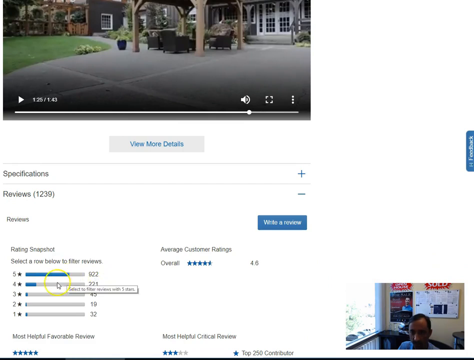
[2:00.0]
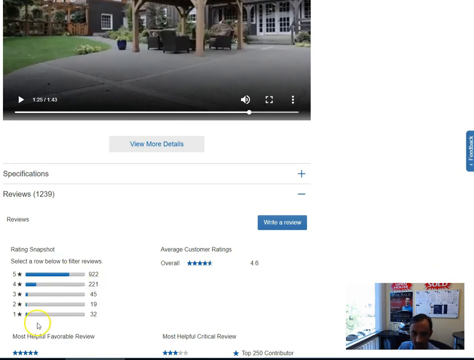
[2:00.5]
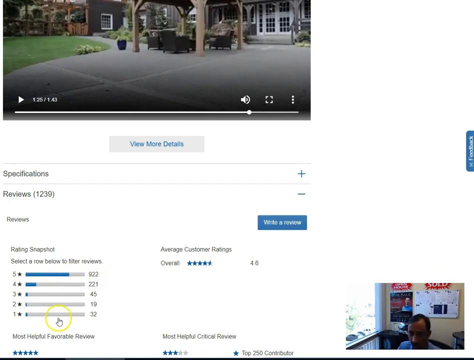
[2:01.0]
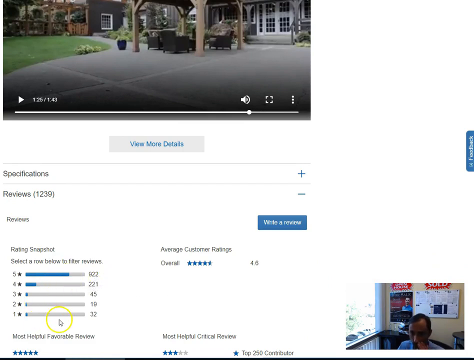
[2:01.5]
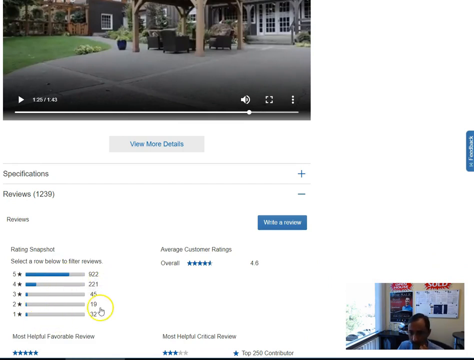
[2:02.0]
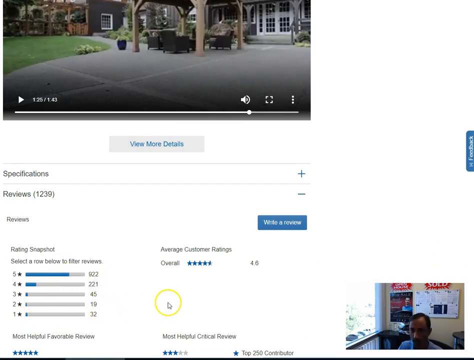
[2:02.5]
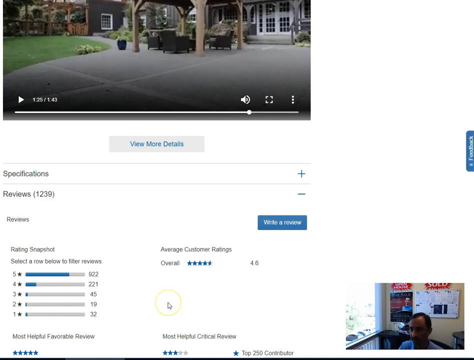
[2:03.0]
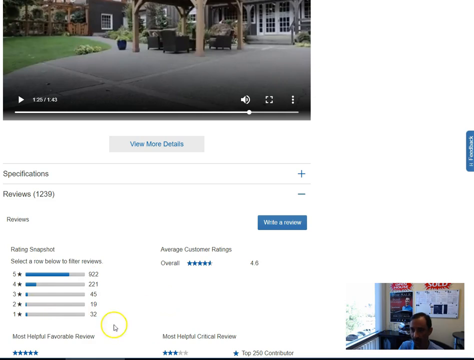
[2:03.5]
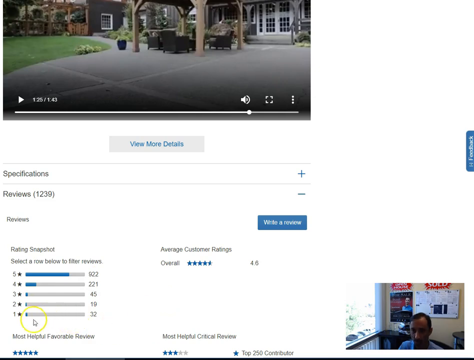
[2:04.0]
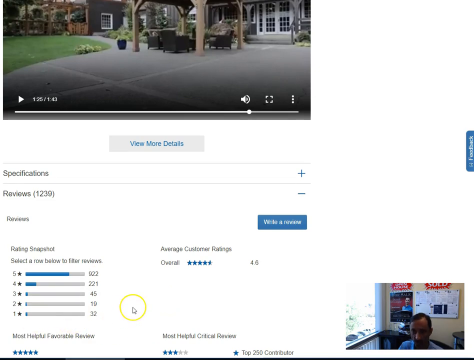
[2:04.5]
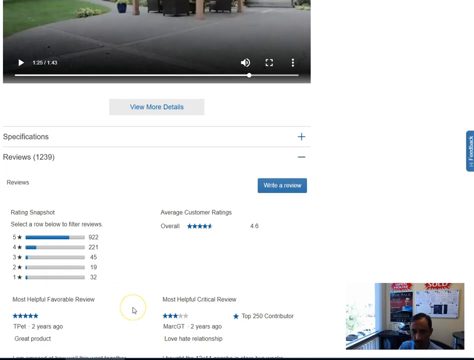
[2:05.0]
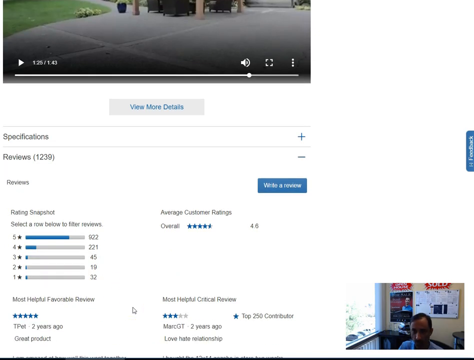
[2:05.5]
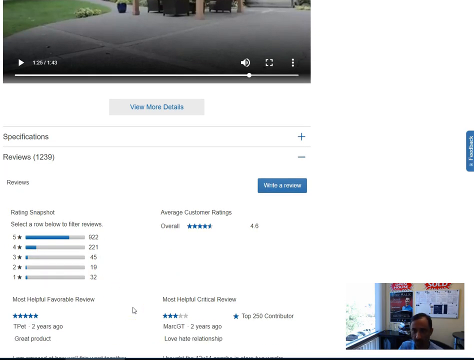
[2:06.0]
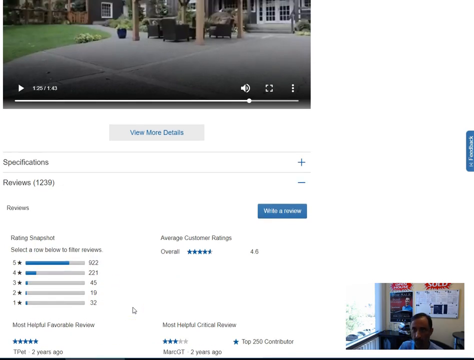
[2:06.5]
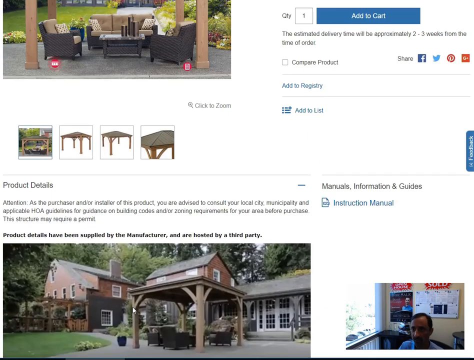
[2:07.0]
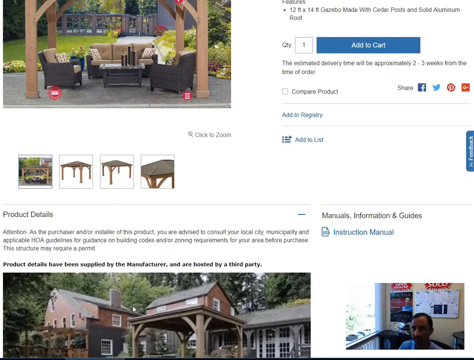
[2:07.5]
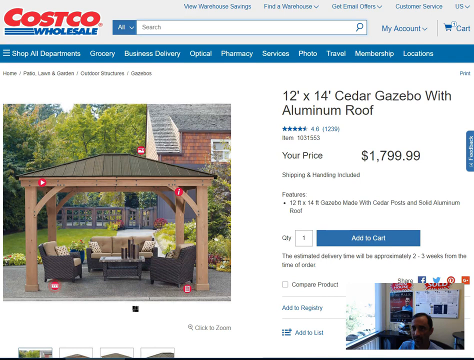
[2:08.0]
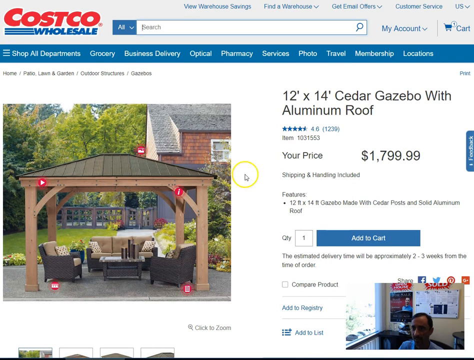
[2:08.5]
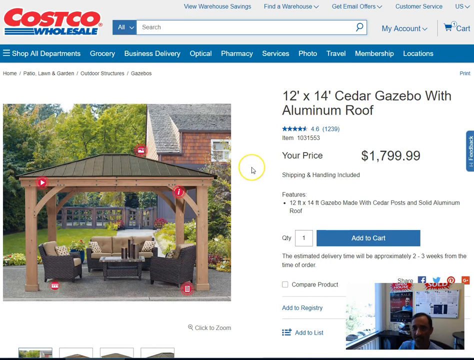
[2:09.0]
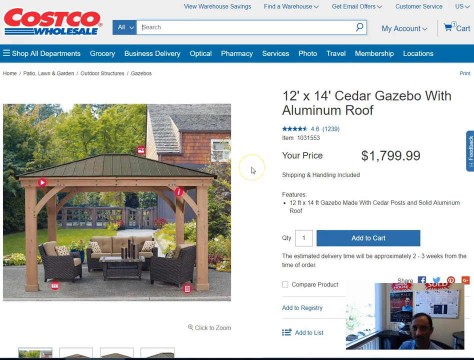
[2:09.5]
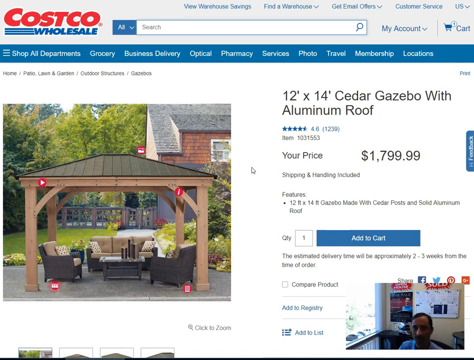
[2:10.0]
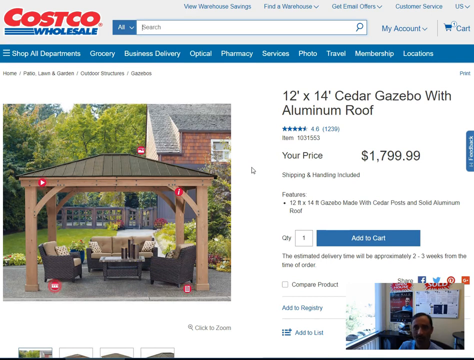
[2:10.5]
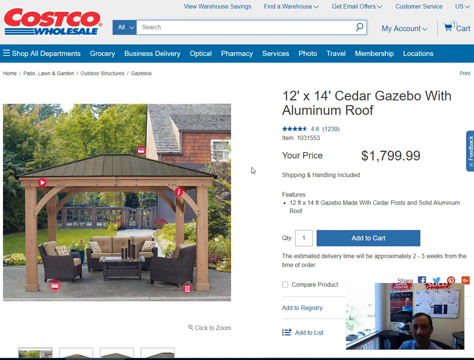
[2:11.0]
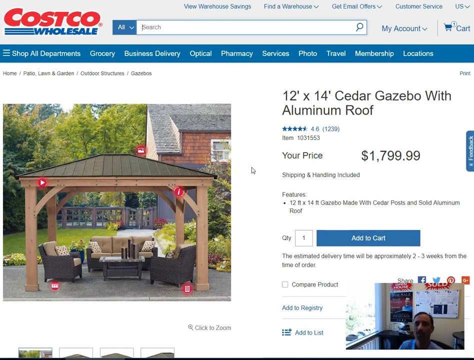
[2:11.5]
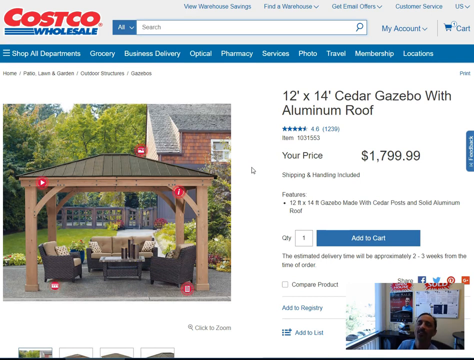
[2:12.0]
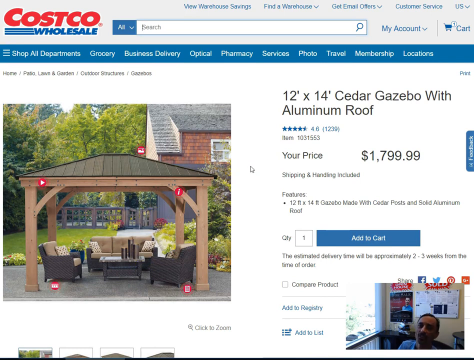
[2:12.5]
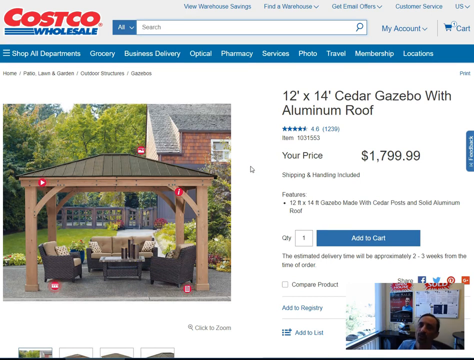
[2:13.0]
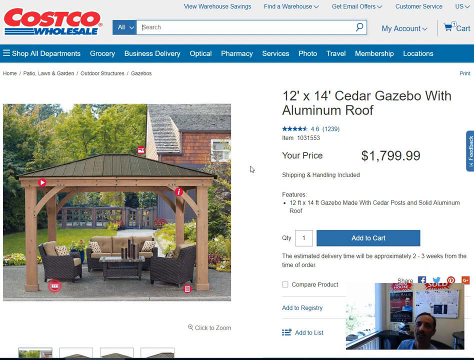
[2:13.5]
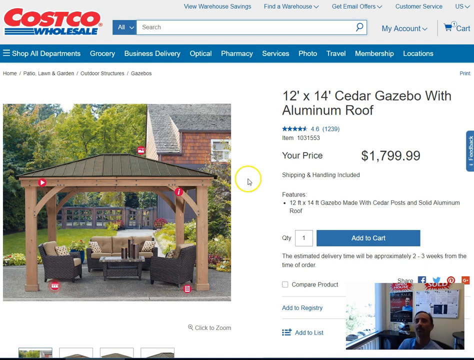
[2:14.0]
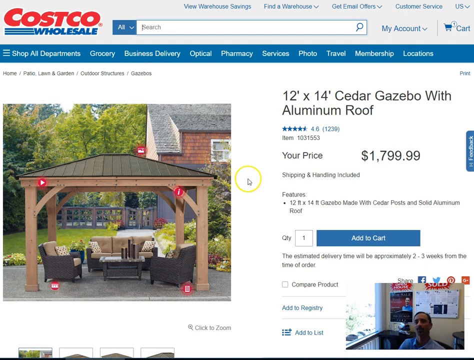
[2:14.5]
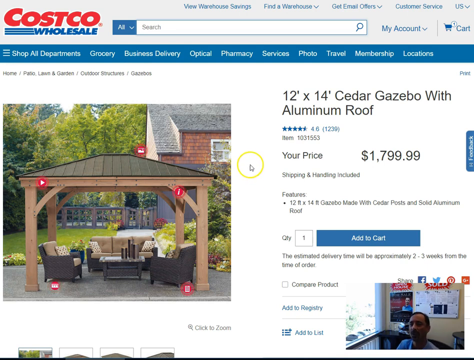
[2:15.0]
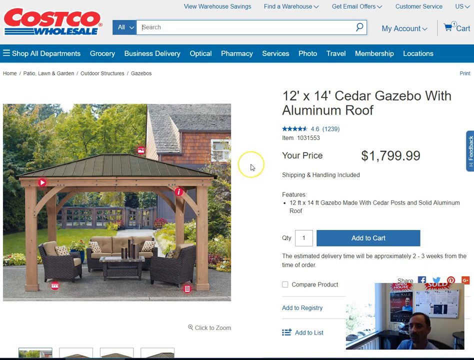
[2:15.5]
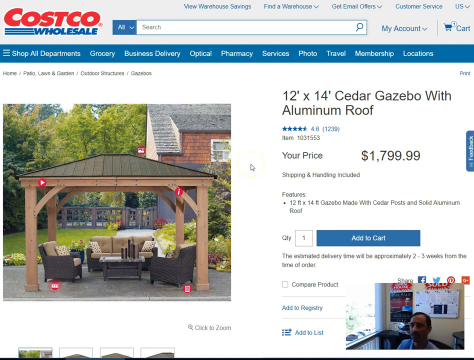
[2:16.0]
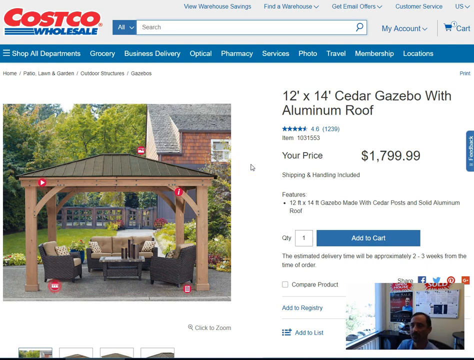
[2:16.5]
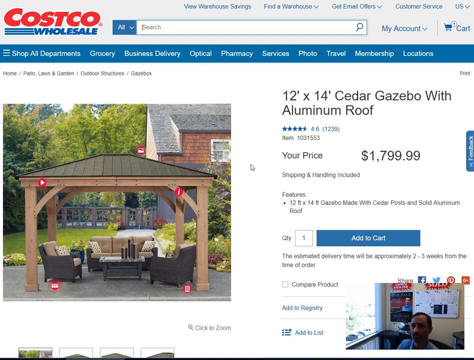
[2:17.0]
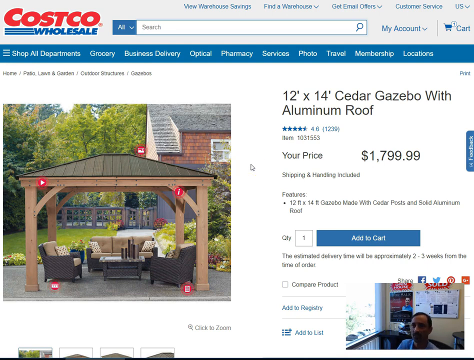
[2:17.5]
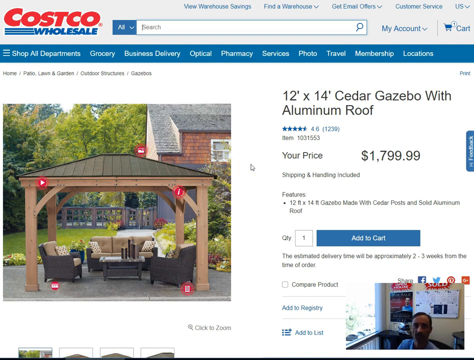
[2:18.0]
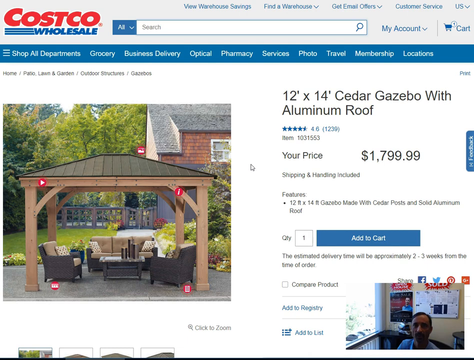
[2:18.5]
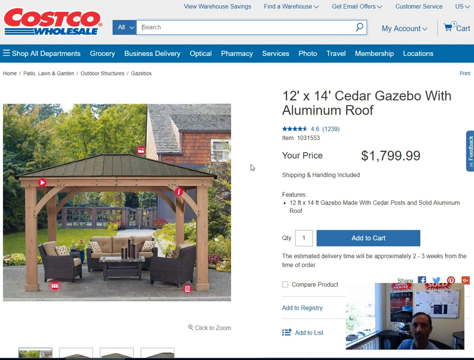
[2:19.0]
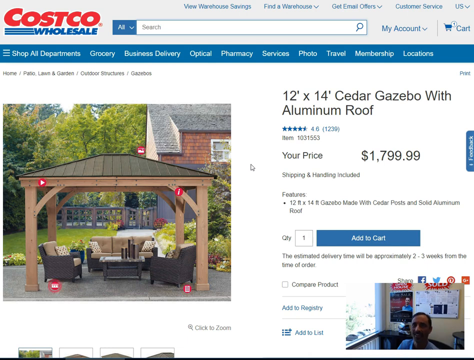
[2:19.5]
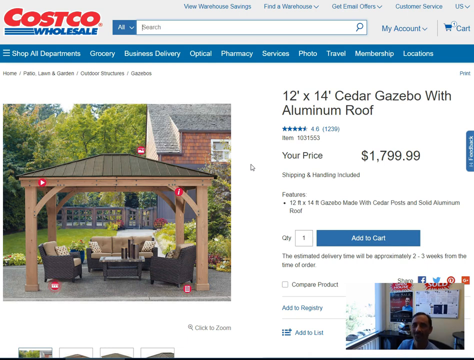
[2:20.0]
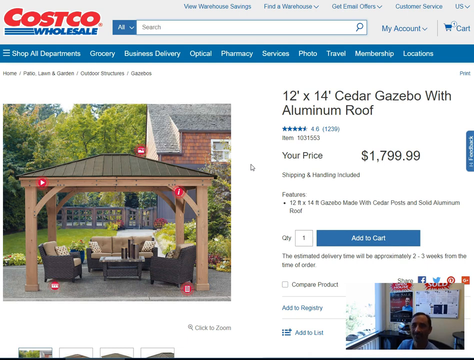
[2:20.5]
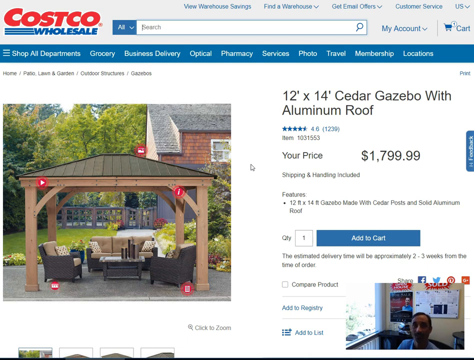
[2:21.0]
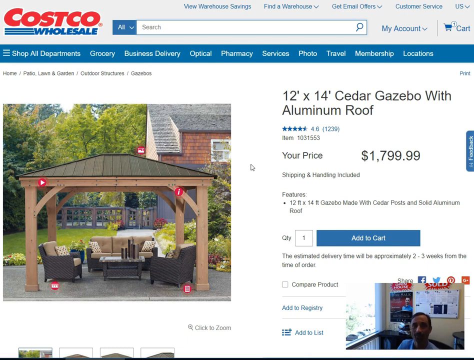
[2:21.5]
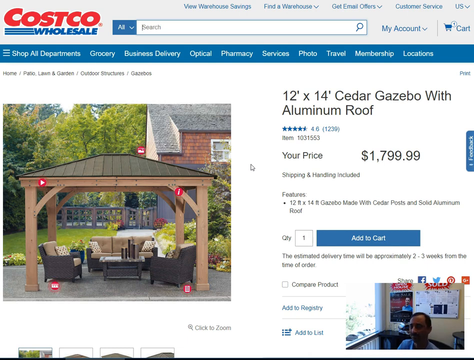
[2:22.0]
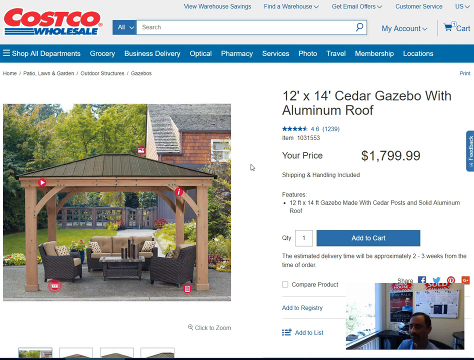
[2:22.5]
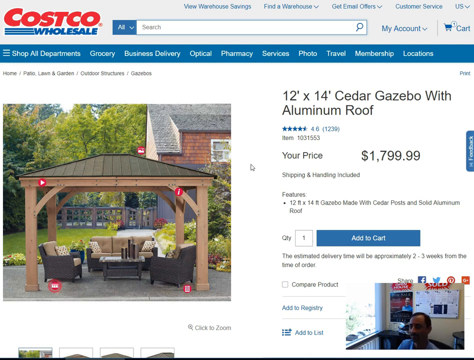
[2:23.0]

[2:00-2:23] On a website, a picture-in-picture video in the lower right of the screen shows a person who seems to be using their cursor to highlight part of the website. The cursor has a yellow circle around it, and the highlighted part seems to show the ratings of the product being displayed. The page scrolls down a little, then scrolls back up, showing a picture of the gazebo on the left side. The gazebo has light brown wood and a black roof, with sofas underneath in tan and dark gray. In the background is a house with adobe-colored bricks and a gray roof, along with some trees and what looks like a log covered in grass.